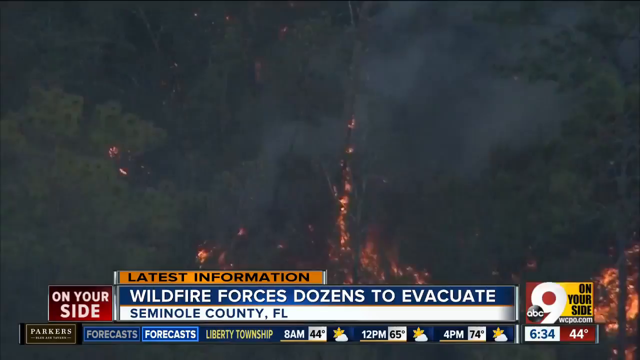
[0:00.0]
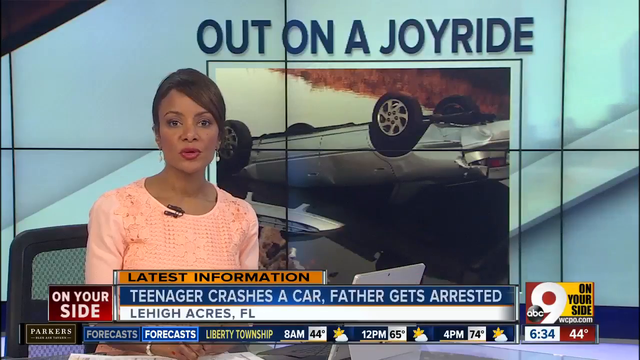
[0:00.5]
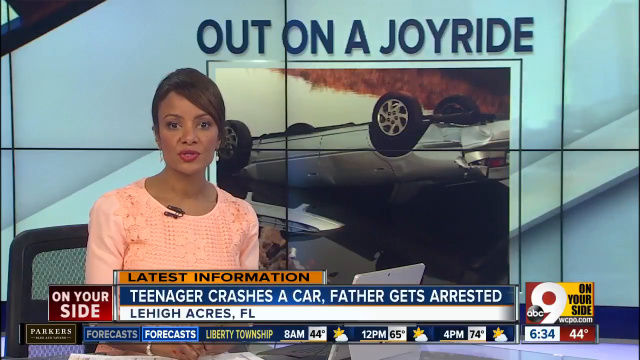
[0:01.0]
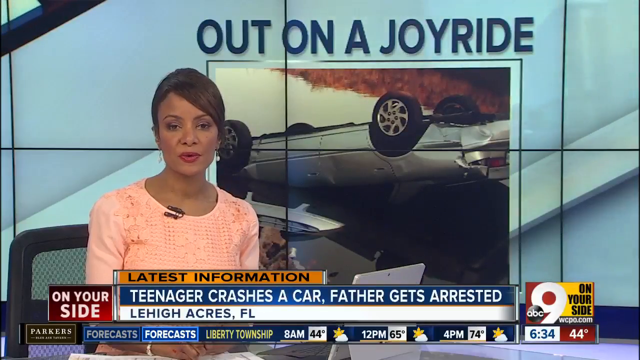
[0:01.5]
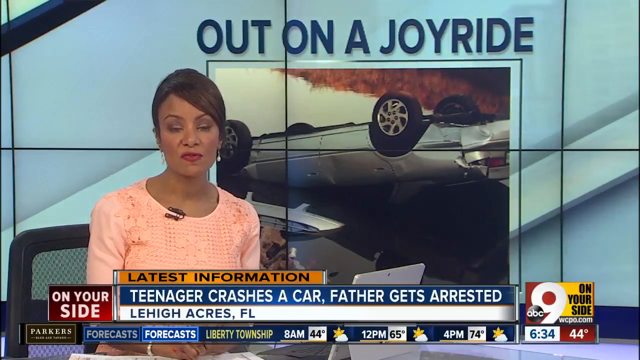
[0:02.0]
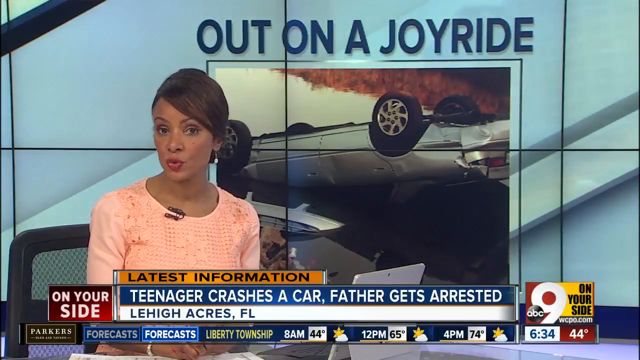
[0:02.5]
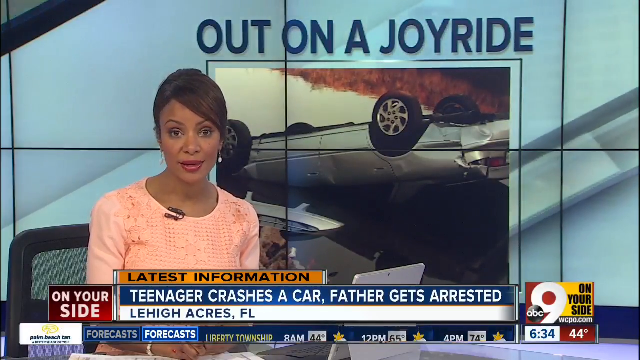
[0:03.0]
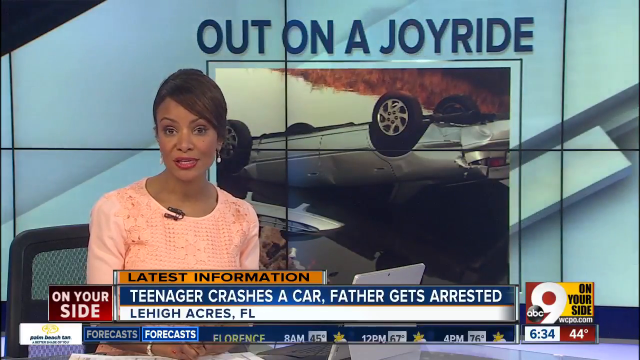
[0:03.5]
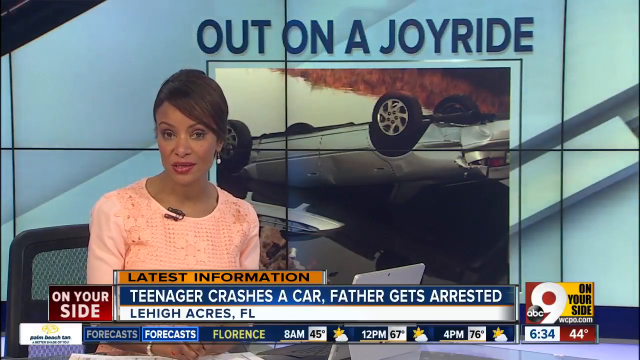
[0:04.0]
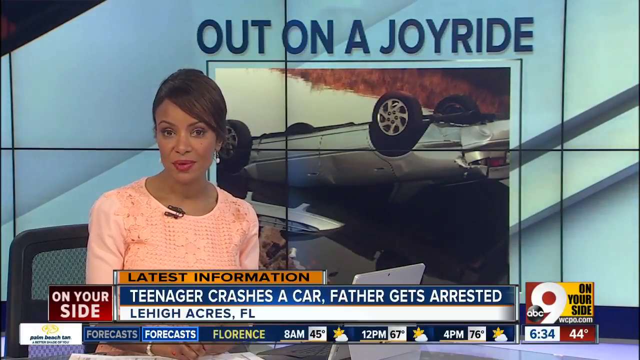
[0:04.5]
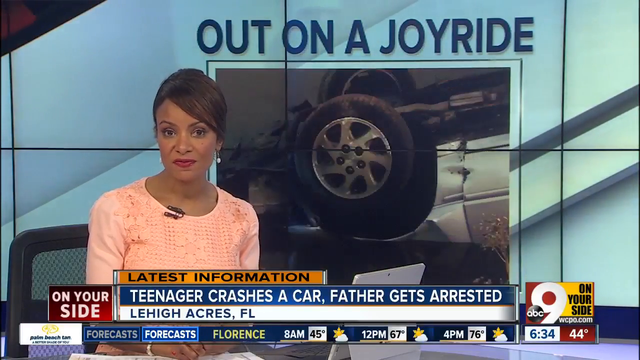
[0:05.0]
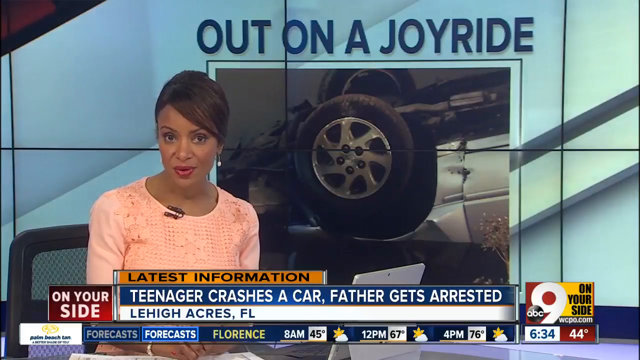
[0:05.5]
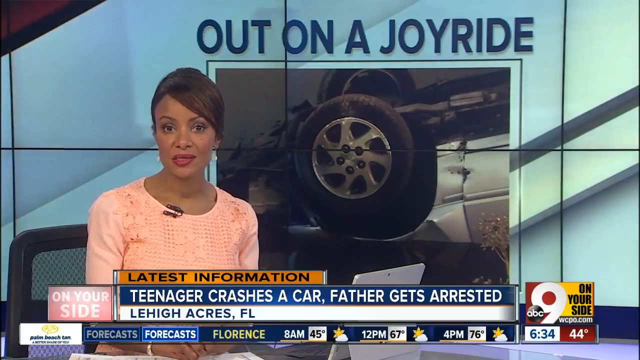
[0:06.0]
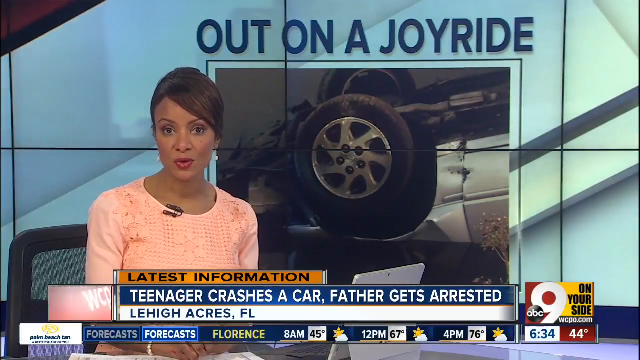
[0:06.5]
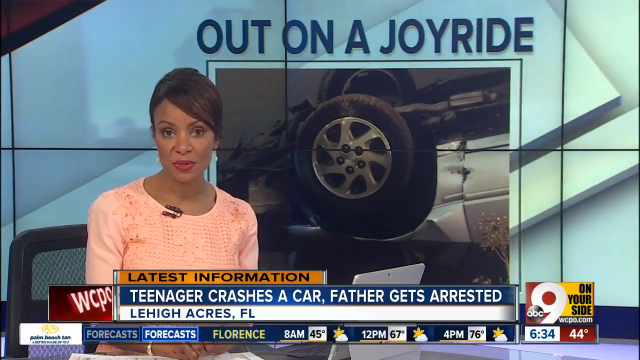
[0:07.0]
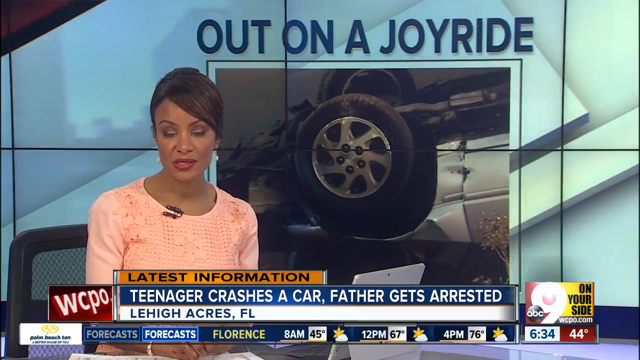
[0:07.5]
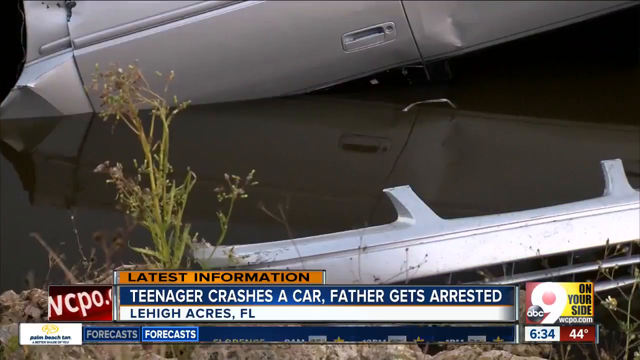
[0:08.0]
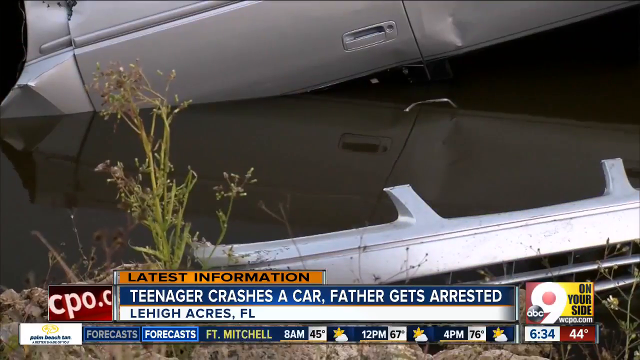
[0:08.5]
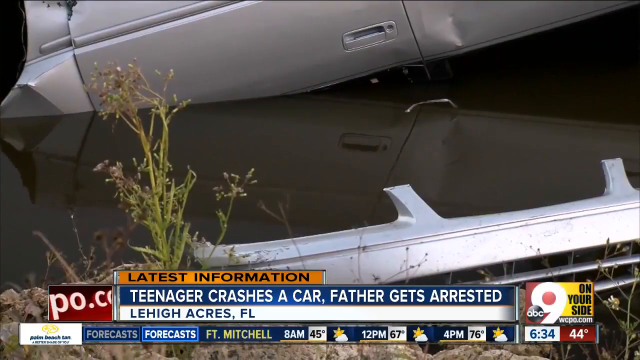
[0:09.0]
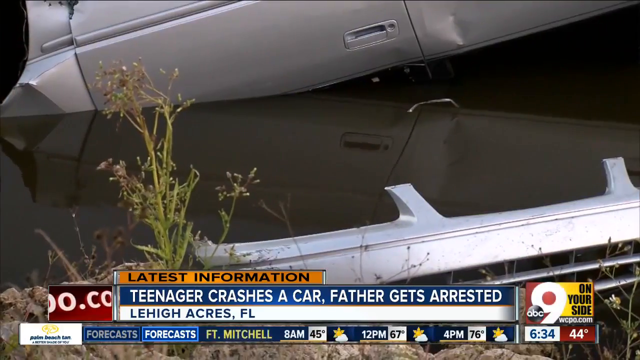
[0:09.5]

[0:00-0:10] A live news broadcast covers a fire in Semino country that is forcing wildlife to evacuate; no firefighters are seen in the picture. The screen also shows a story about a car crashed by a teenager on a joy ride in Lehigh acres, which ended with the father arrested and jailed for being reckless. The crash looks fatal, with possibly no survivors.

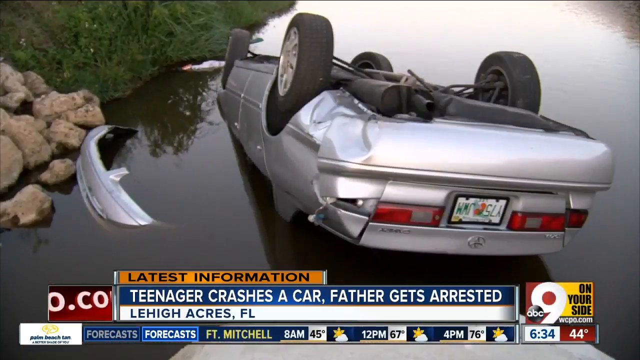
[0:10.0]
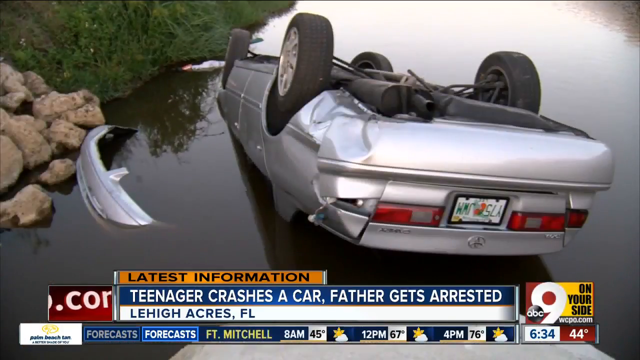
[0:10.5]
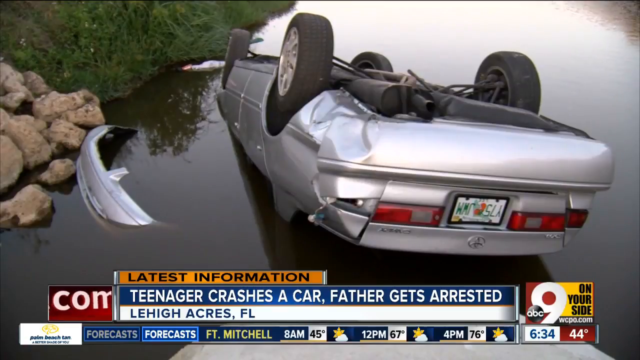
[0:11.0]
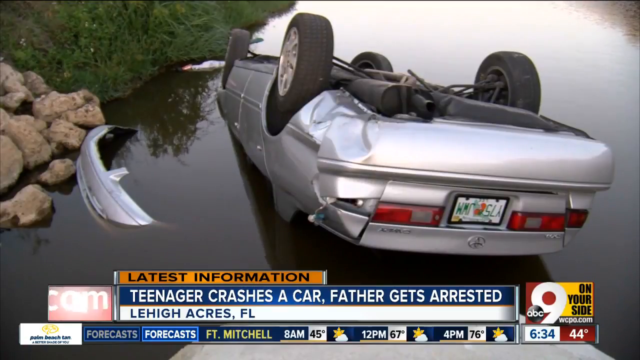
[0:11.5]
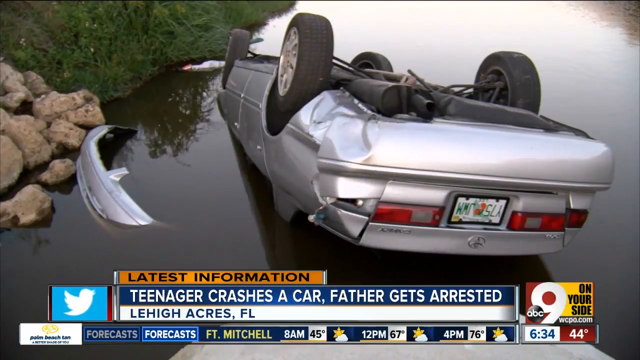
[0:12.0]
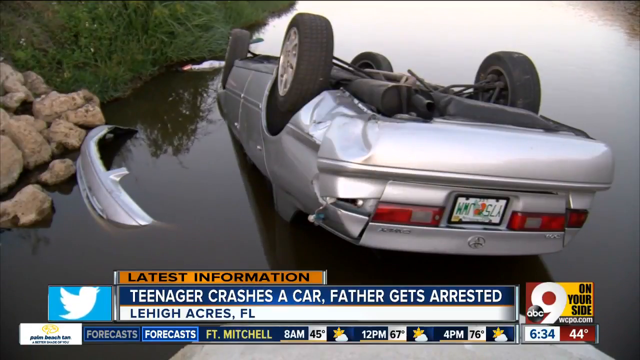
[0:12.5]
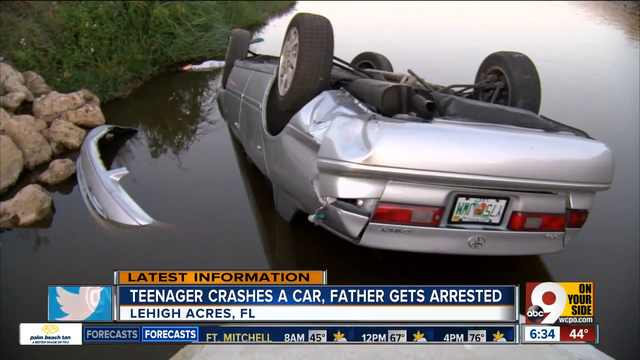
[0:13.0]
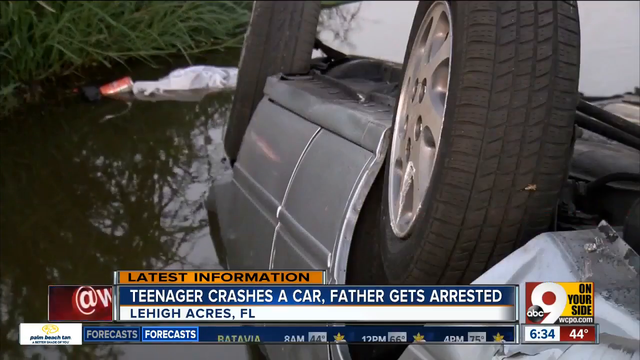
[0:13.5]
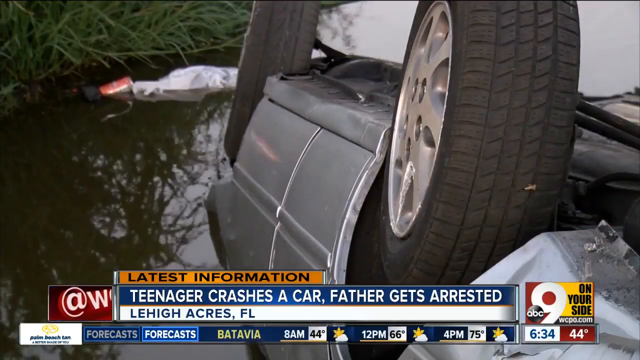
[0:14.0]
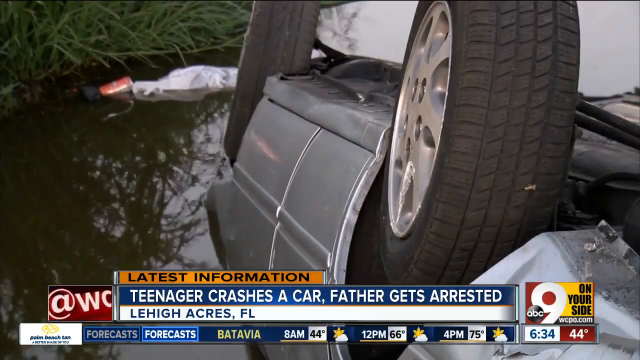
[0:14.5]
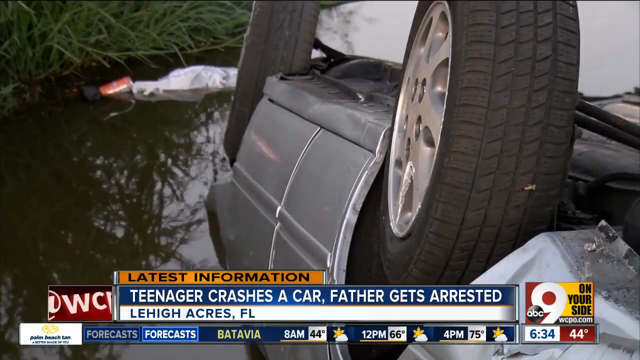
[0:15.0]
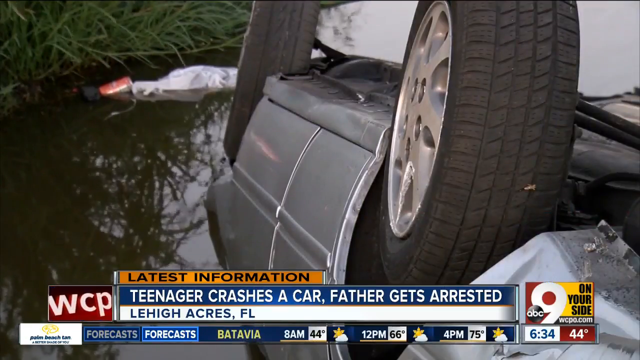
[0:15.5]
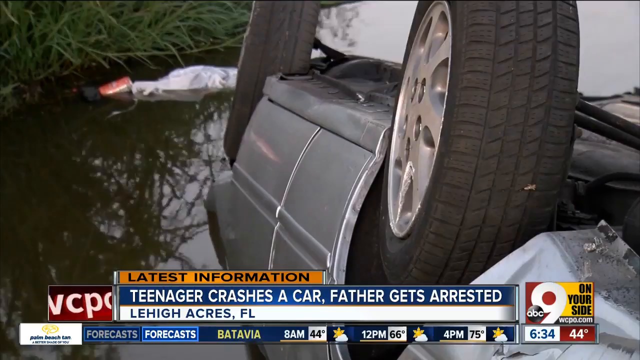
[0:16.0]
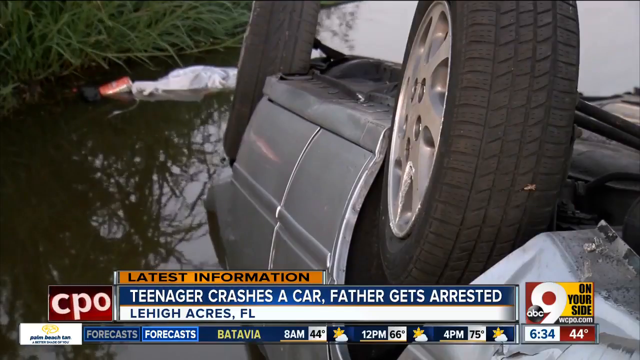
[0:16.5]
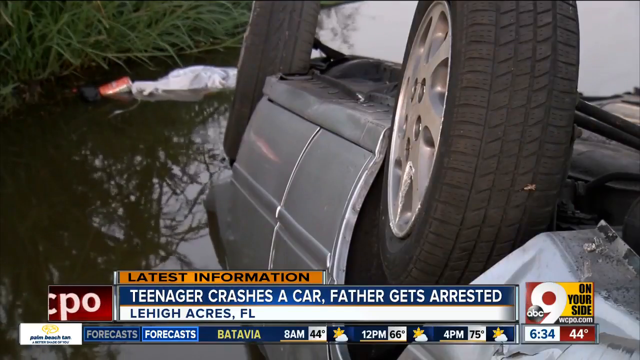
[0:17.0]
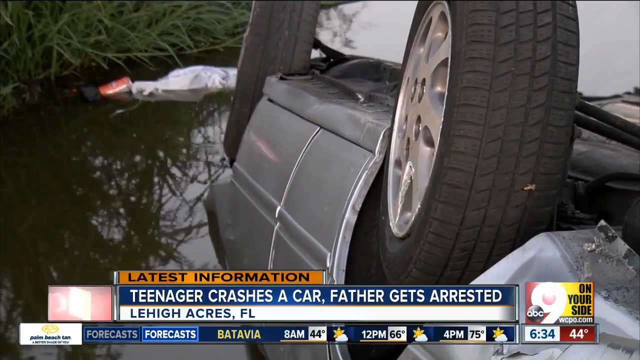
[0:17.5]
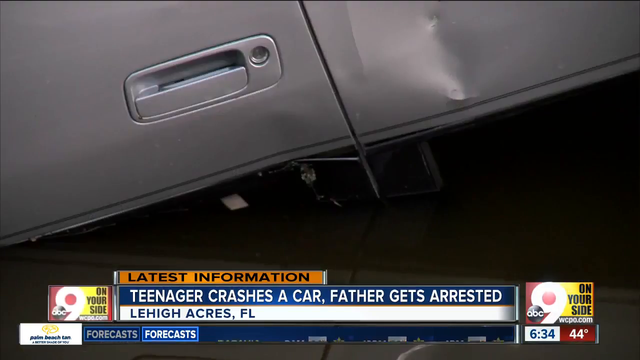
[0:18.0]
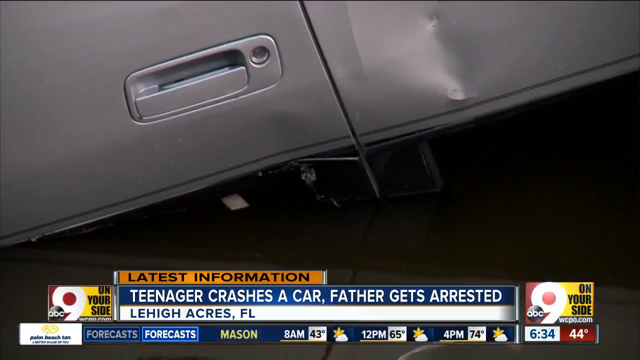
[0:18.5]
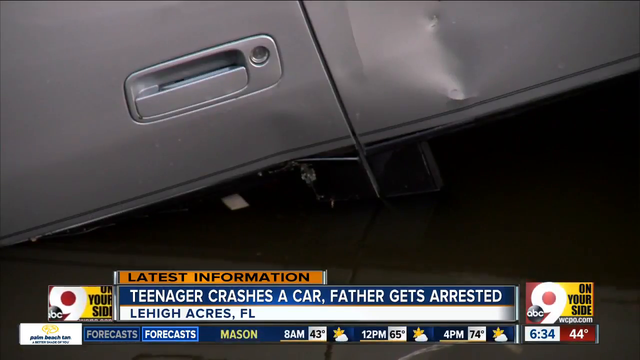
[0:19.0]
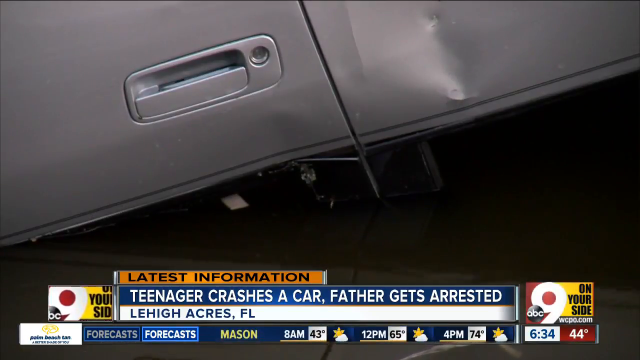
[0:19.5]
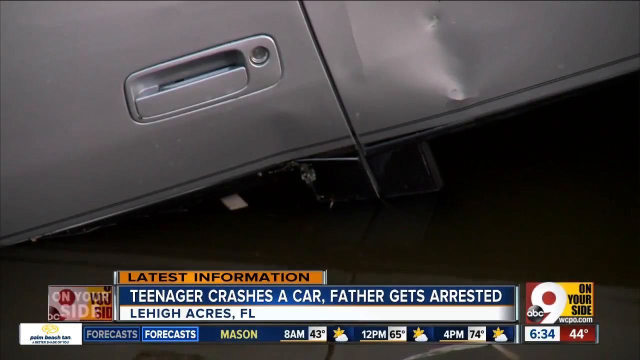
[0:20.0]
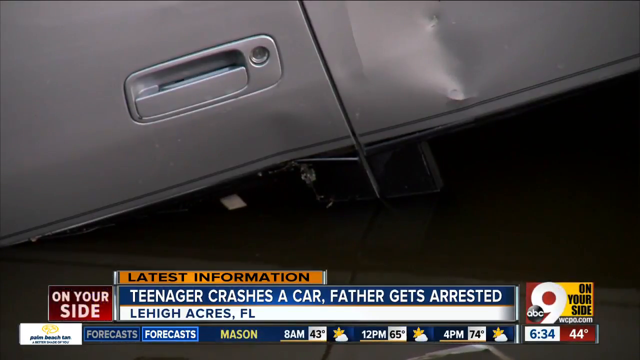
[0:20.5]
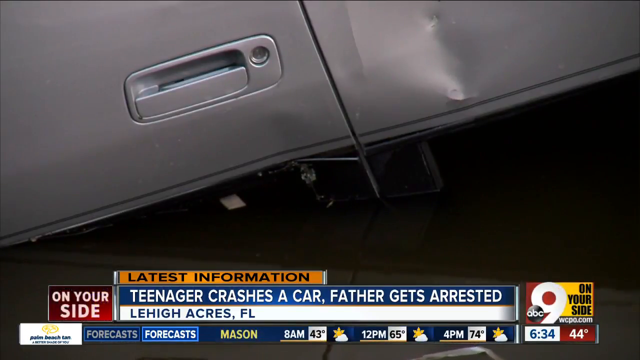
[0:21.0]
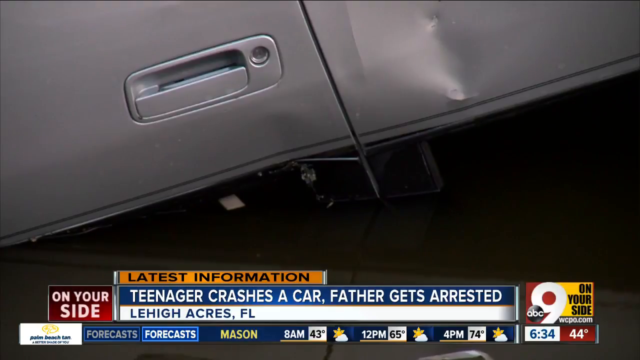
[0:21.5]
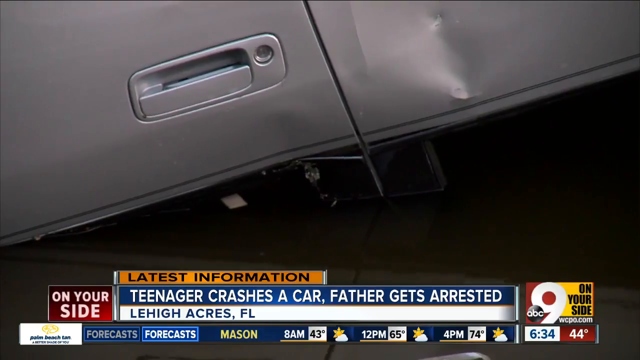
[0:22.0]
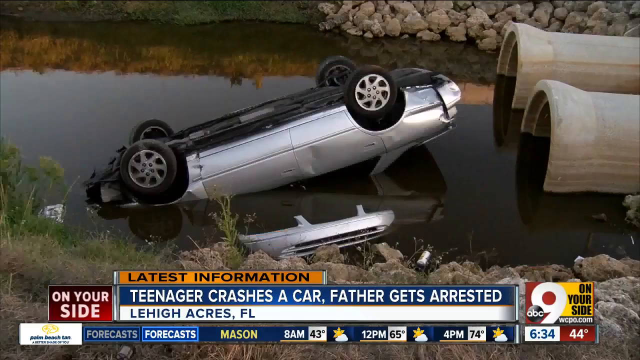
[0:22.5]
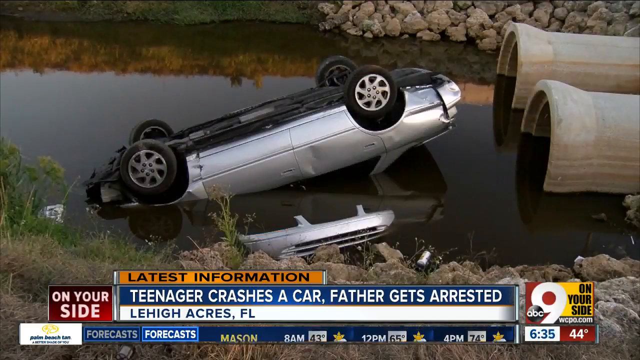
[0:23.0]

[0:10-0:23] The news story about a teenager's joy-ride car crash in Lehigh Acres continues, reporting that the father was arrested for being reckless. The picture shows the car upside down close to drainage pipes in a dump, and the wreckage is extensive; the crash looks fatal, with possibly no survivors.